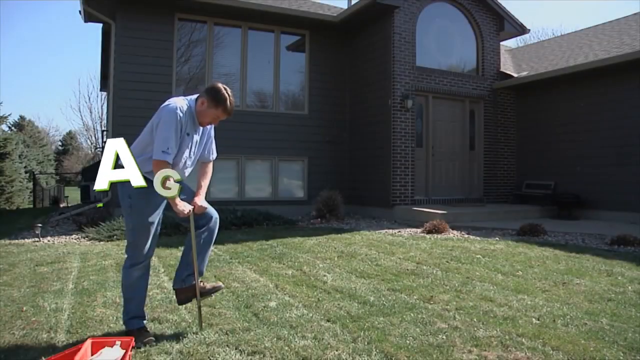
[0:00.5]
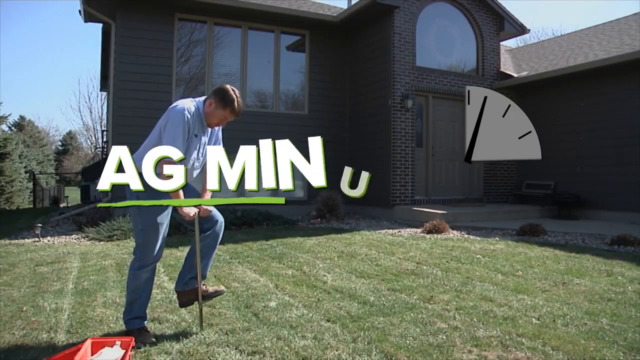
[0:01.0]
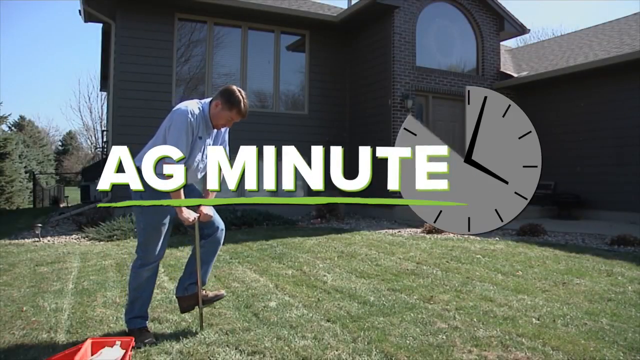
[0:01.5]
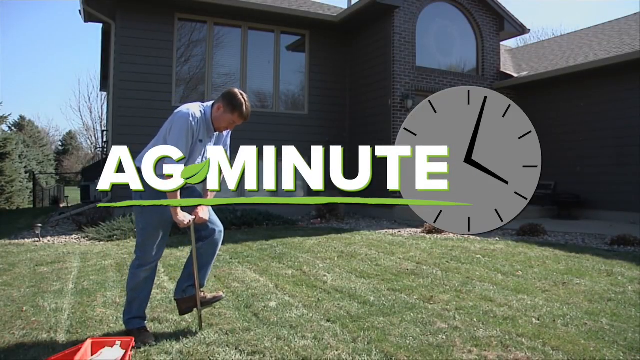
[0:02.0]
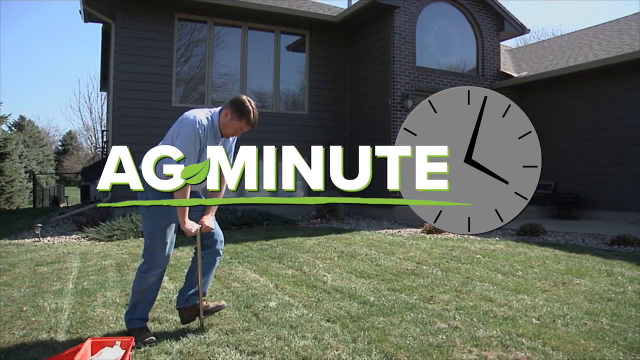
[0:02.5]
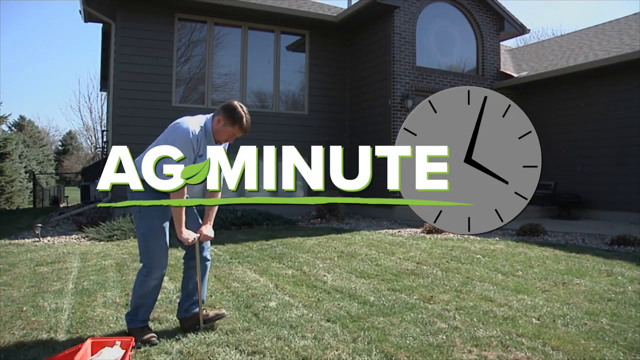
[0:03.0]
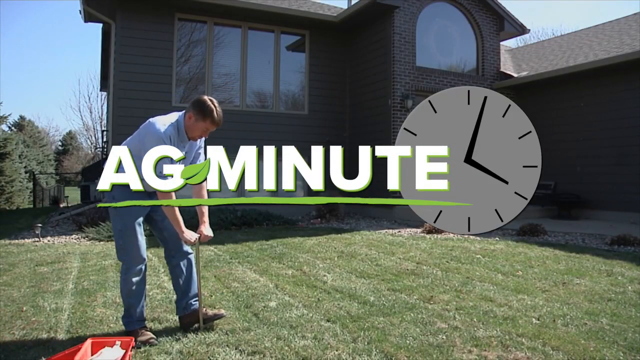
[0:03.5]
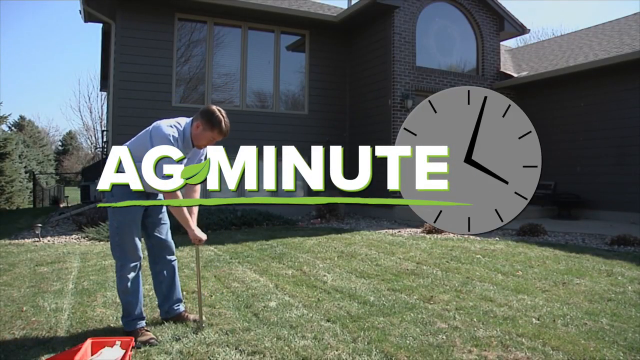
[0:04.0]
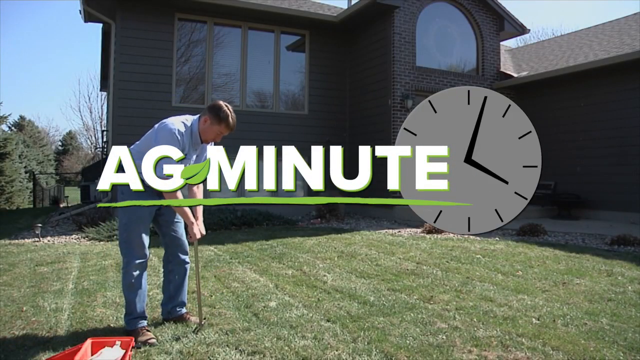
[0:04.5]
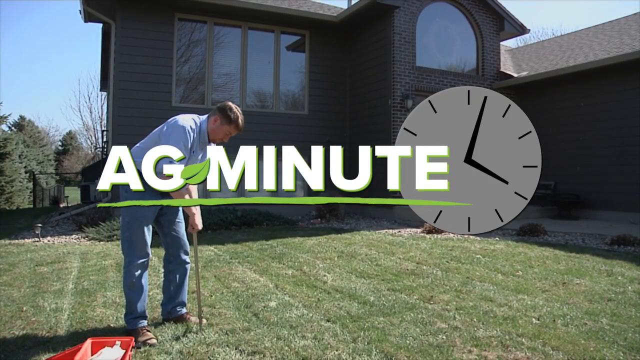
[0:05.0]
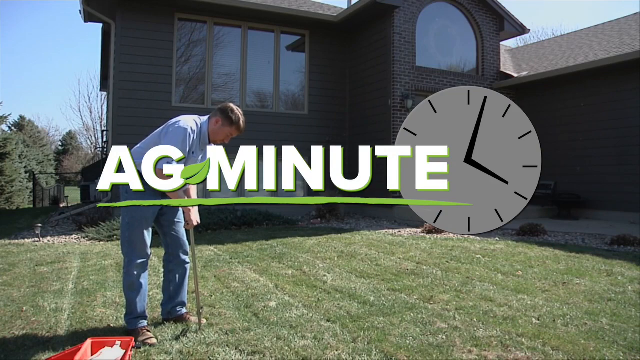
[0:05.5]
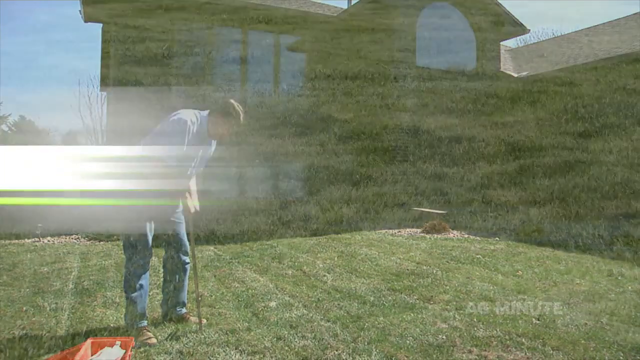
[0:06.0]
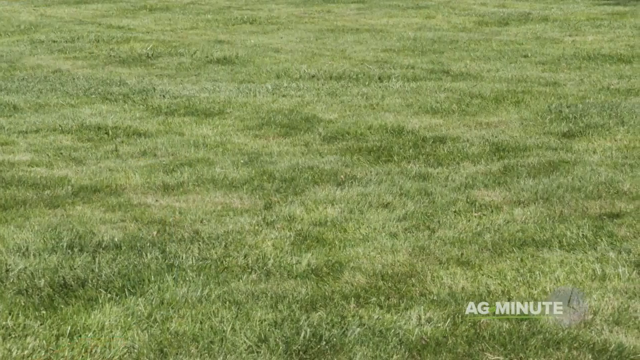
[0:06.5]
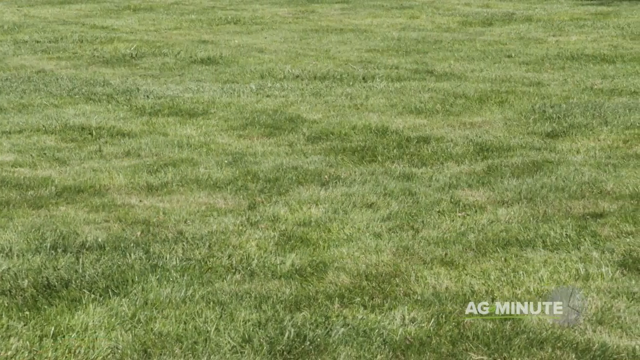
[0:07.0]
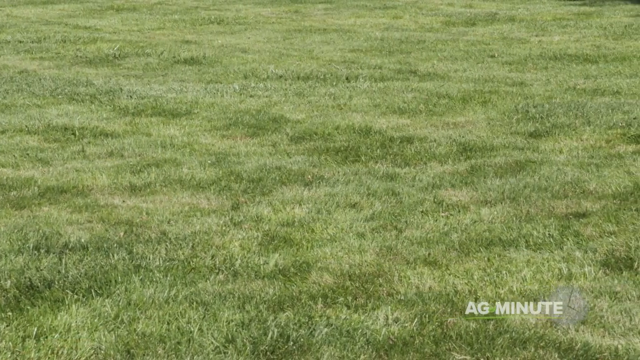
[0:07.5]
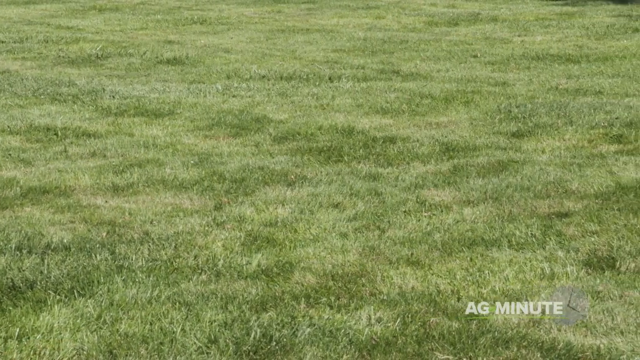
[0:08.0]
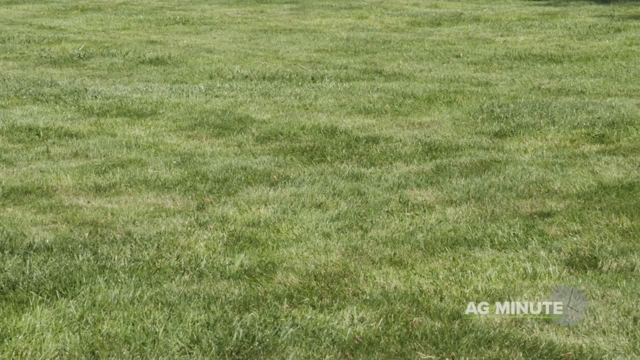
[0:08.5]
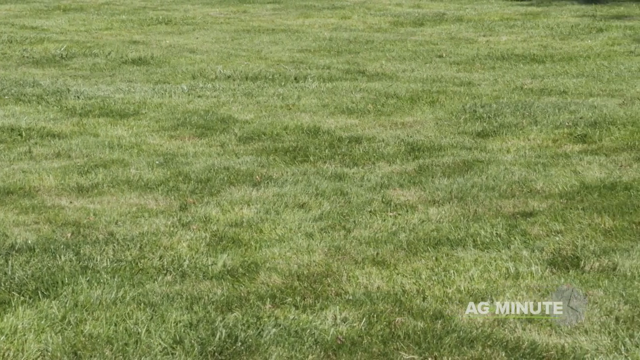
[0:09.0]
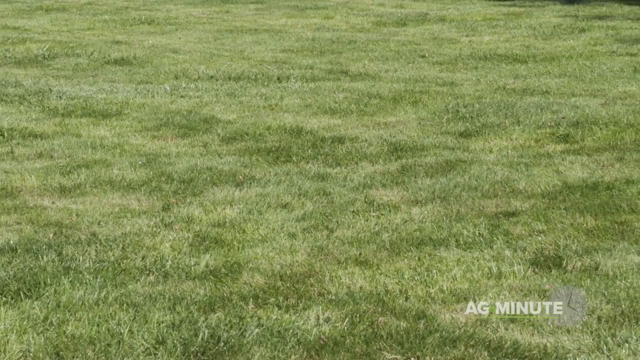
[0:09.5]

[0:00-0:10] A green field is shown, and a person seems to be doing something in it.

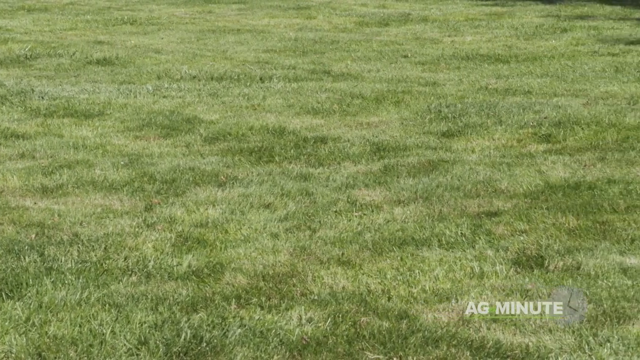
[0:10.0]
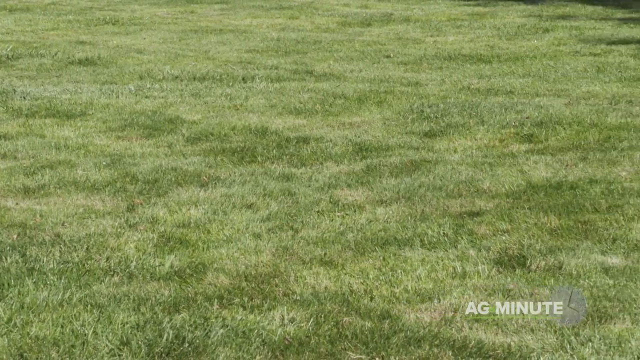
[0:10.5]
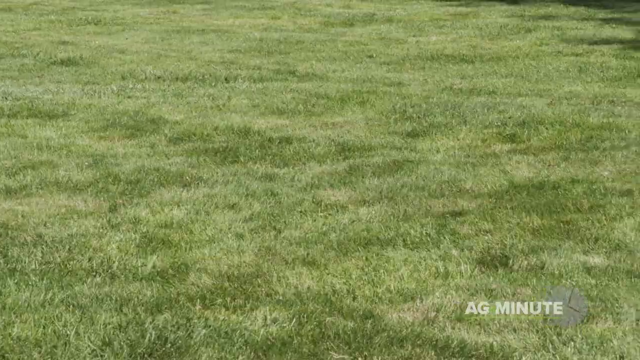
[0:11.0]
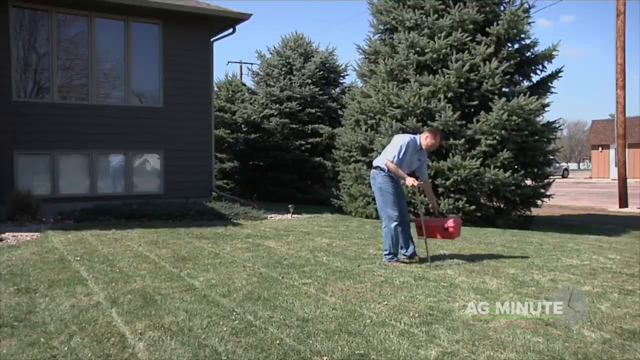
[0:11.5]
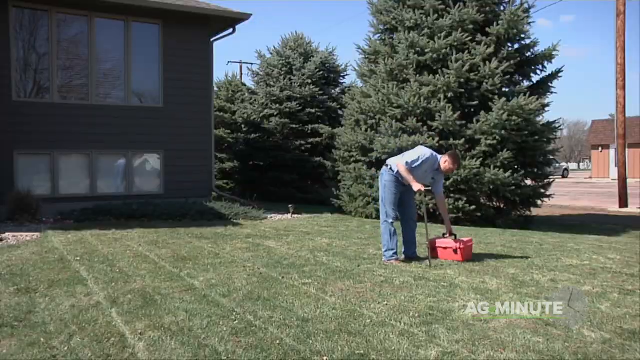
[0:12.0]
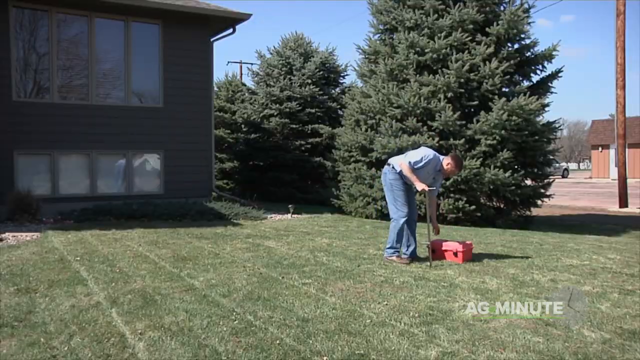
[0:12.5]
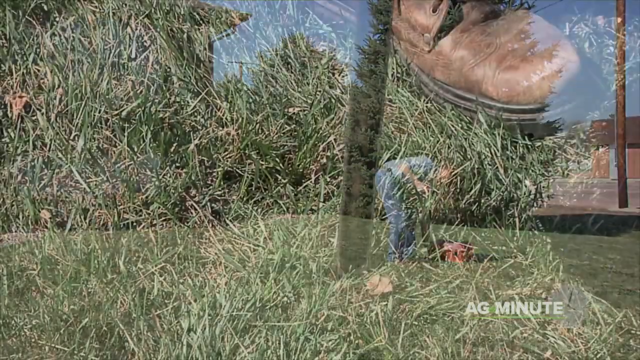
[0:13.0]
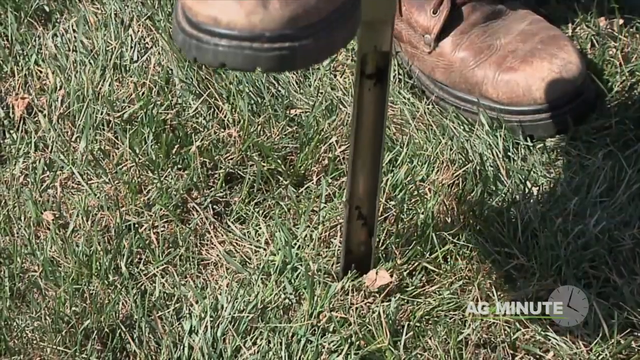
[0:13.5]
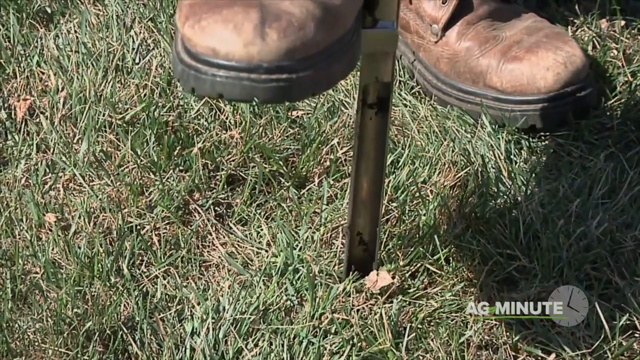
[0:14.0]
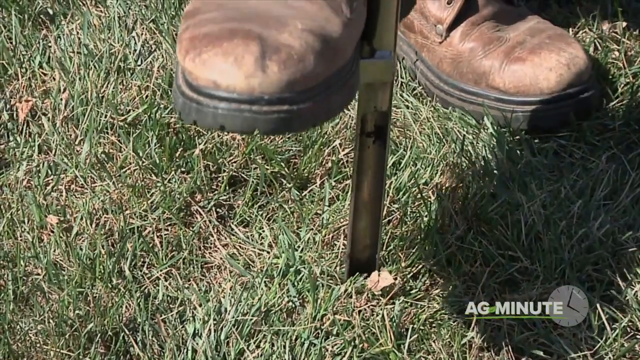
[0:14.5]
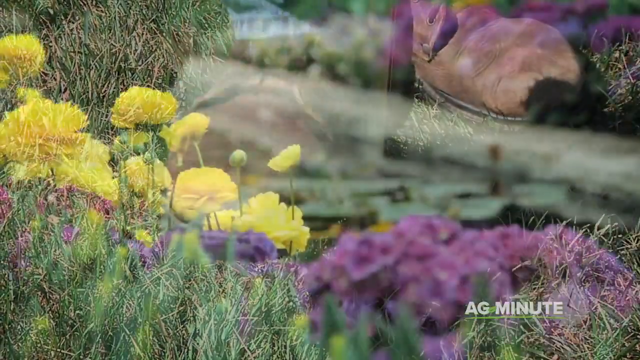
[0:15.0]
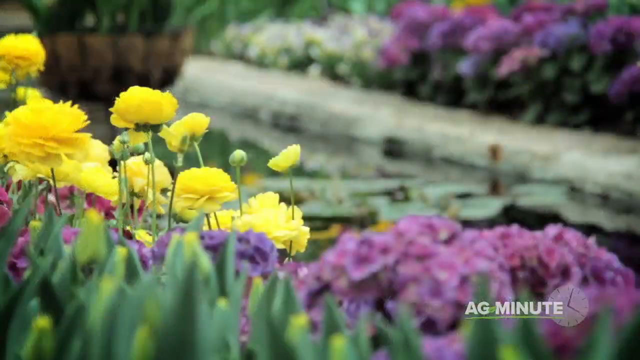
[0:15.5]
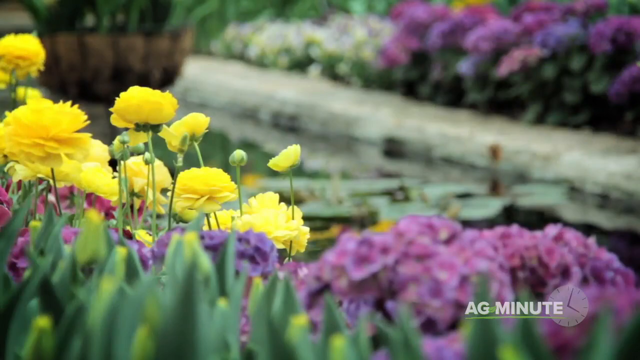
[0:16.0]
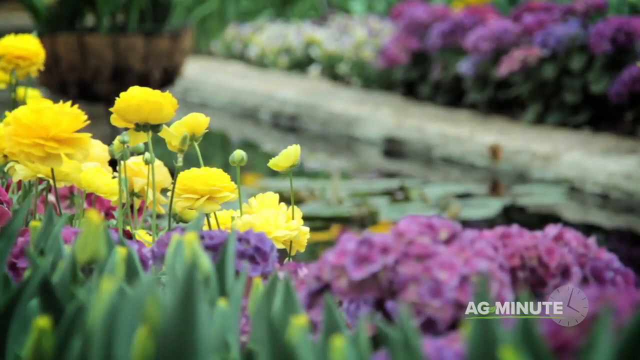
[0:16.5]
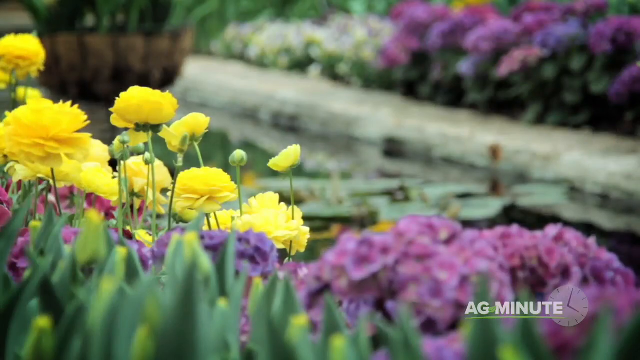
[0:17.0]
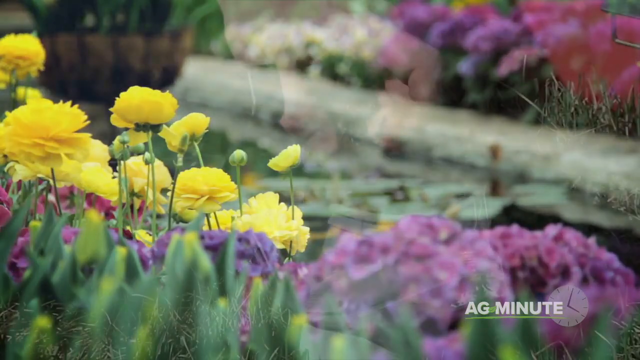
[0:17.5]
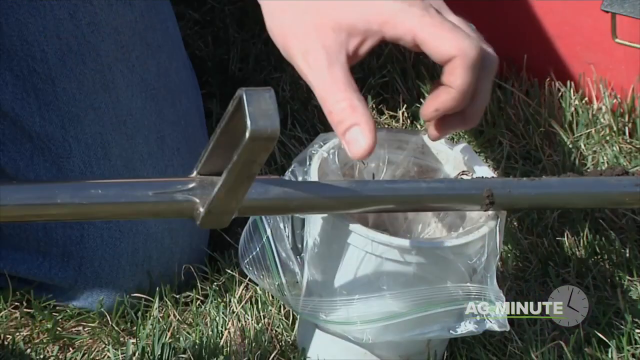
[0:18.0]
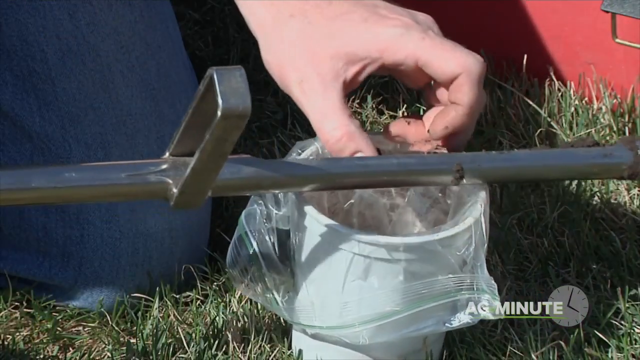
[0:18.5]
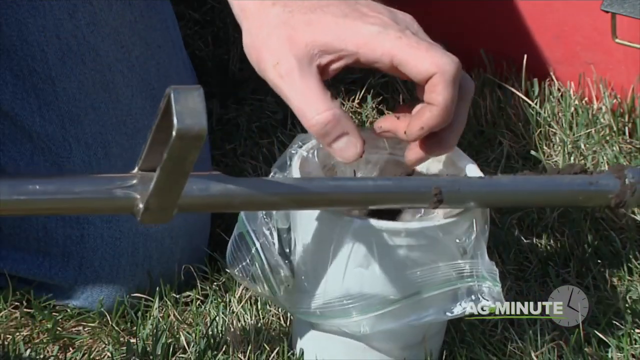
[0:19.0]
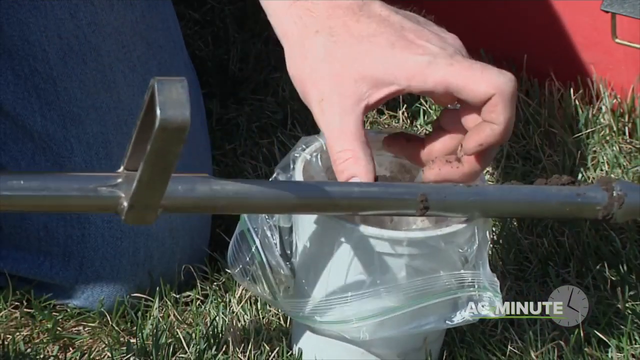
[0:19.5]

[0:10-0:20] A stick is put on the field. The person appears to be analyzing the soil of the area, collecting soil from the field, seemingly to evaluate it.